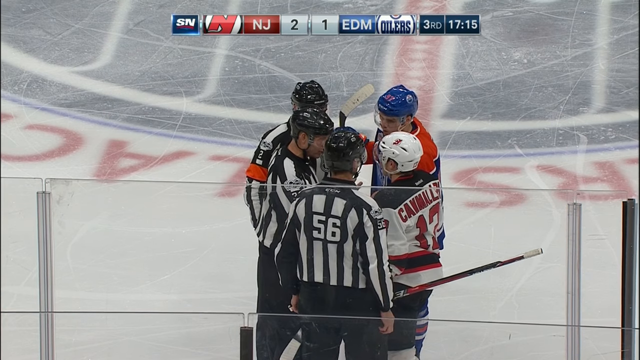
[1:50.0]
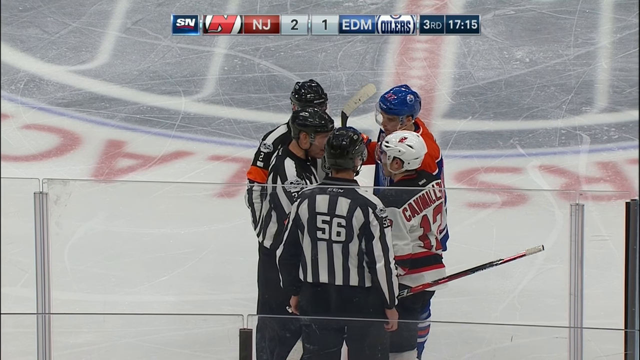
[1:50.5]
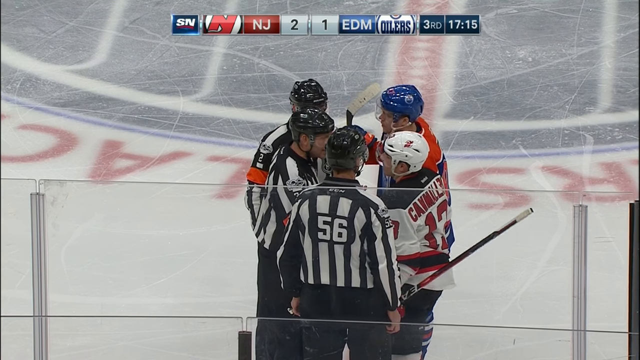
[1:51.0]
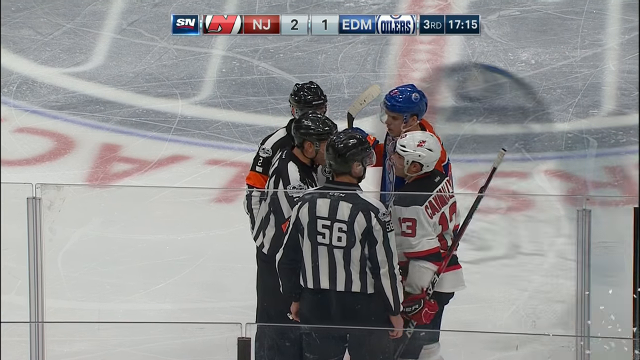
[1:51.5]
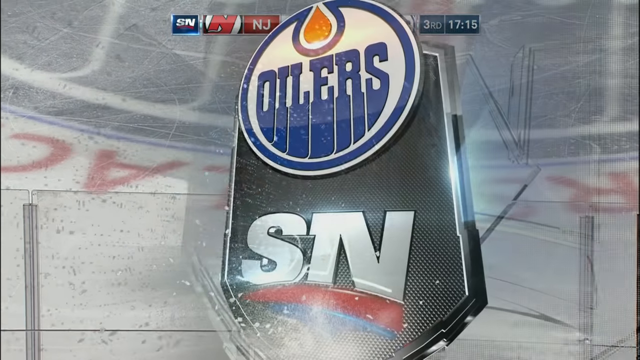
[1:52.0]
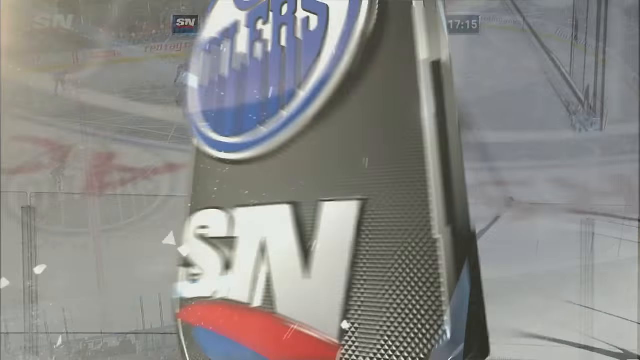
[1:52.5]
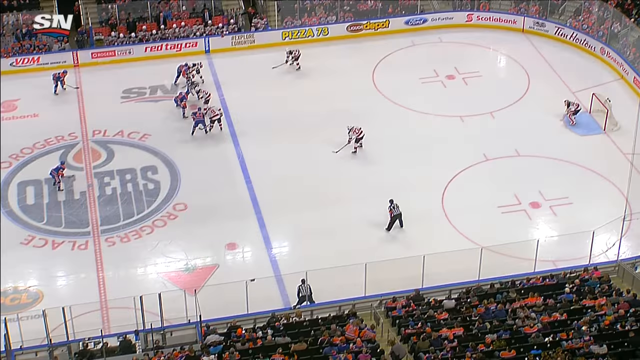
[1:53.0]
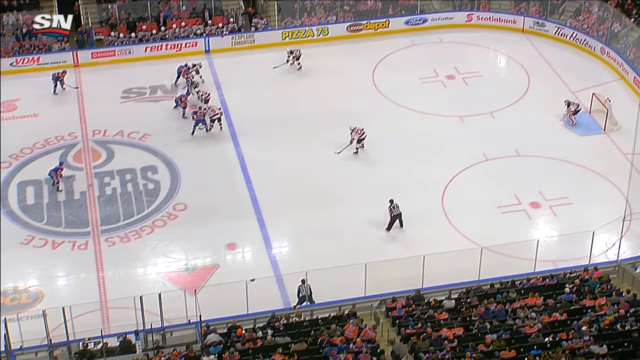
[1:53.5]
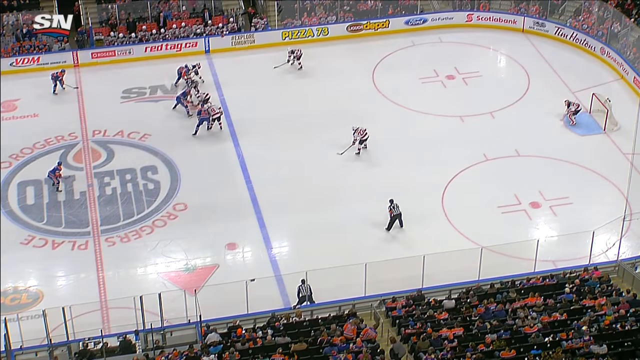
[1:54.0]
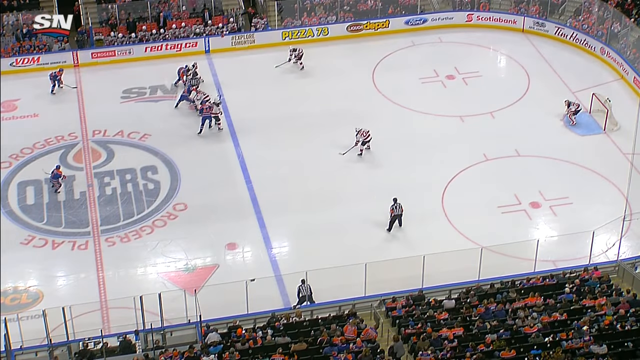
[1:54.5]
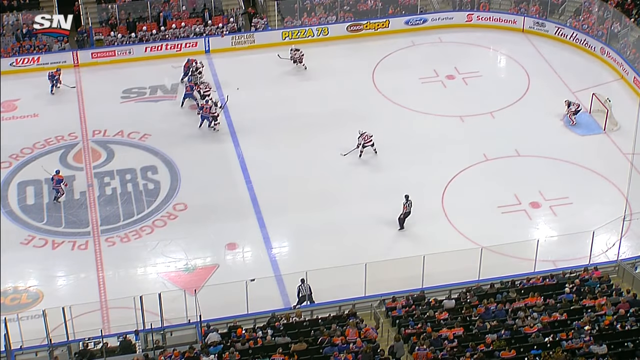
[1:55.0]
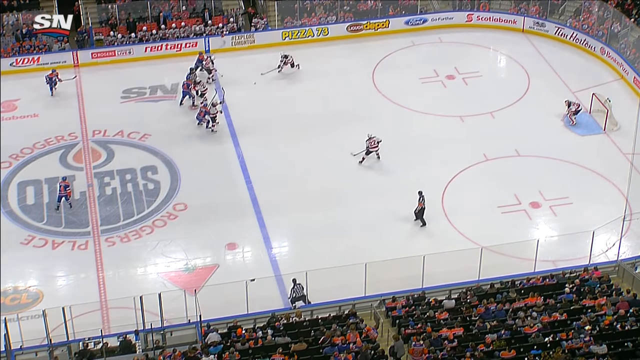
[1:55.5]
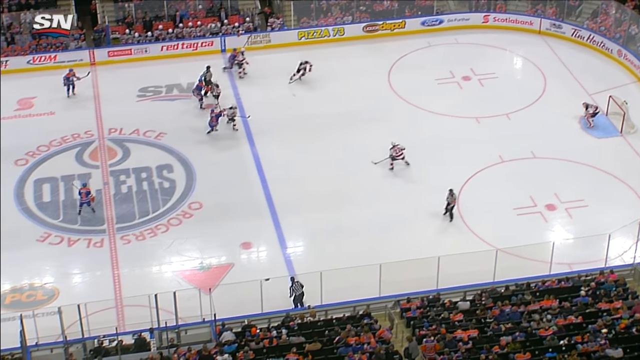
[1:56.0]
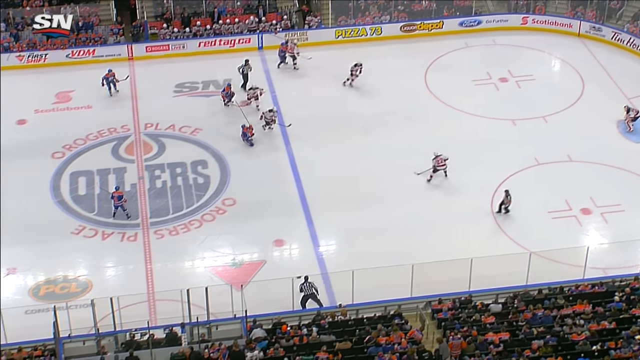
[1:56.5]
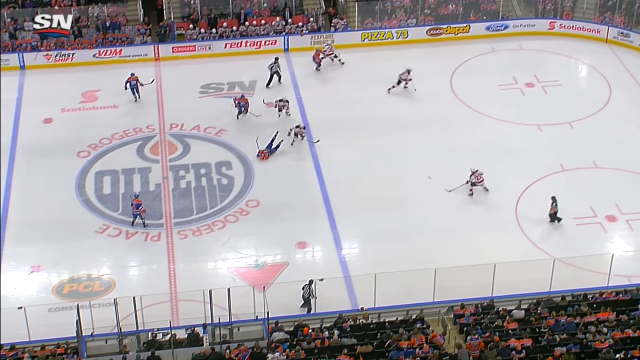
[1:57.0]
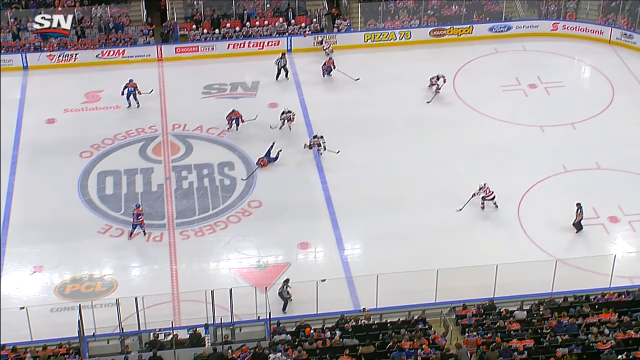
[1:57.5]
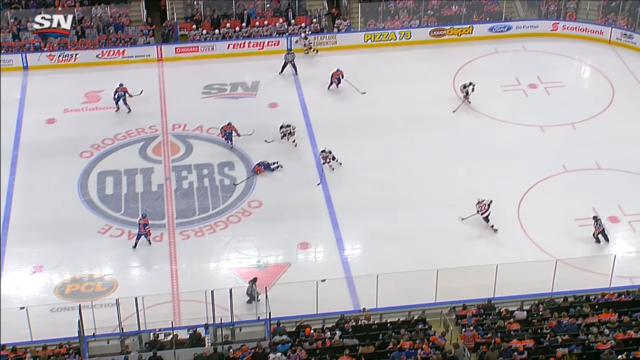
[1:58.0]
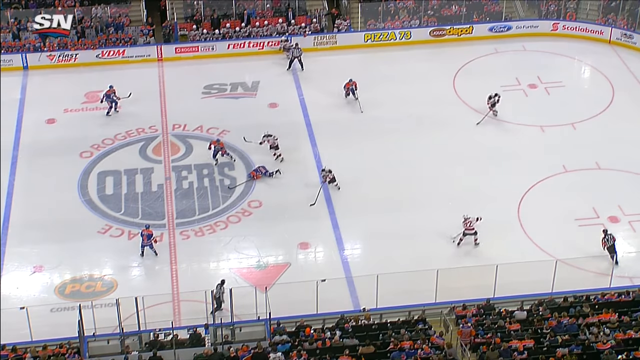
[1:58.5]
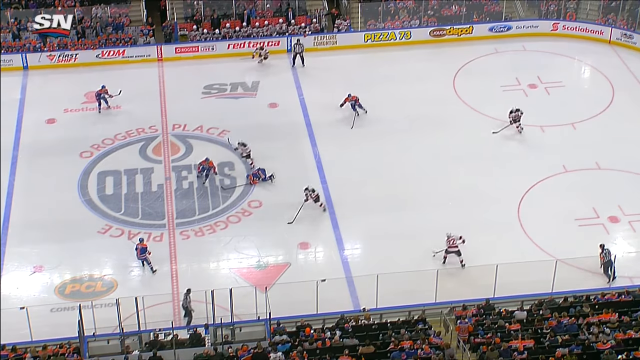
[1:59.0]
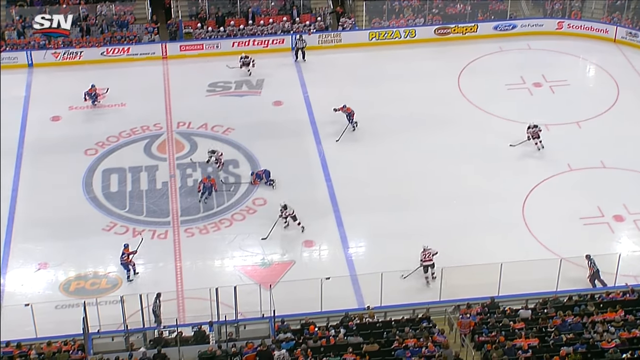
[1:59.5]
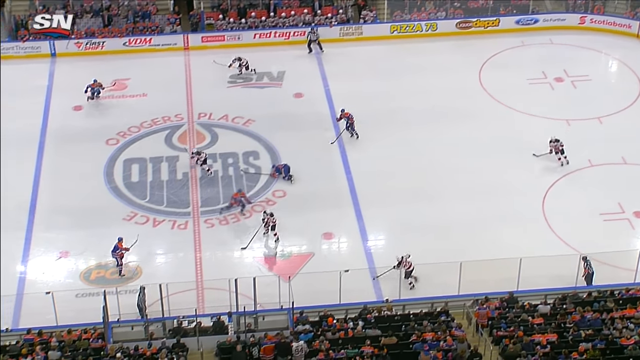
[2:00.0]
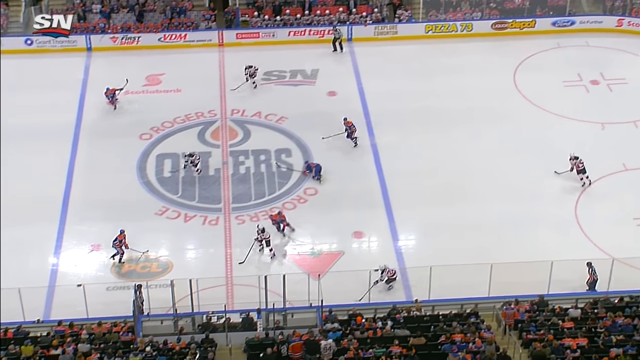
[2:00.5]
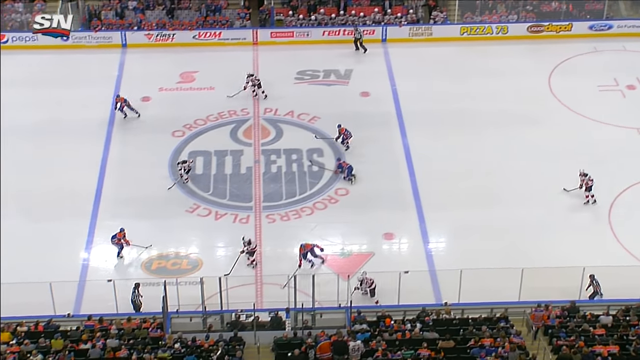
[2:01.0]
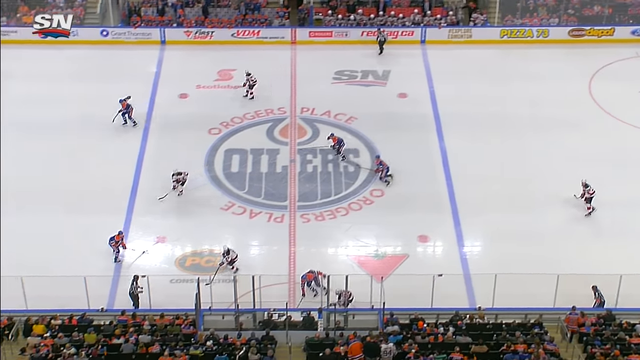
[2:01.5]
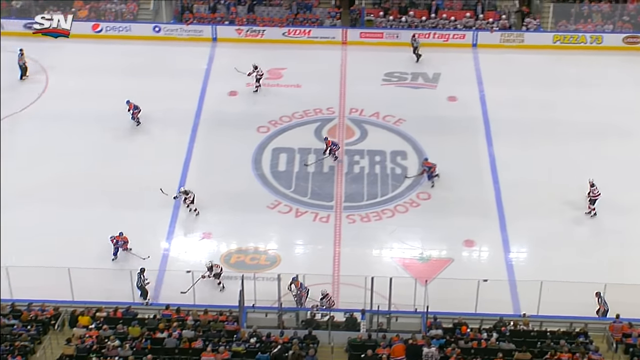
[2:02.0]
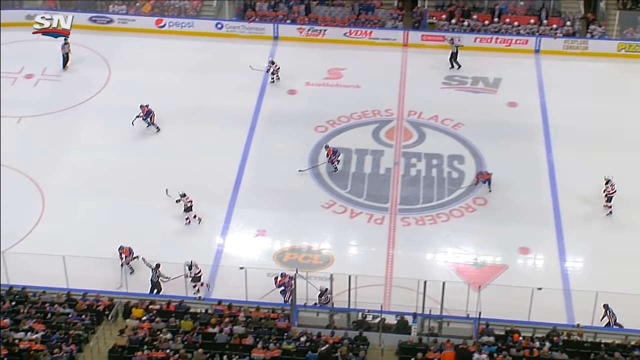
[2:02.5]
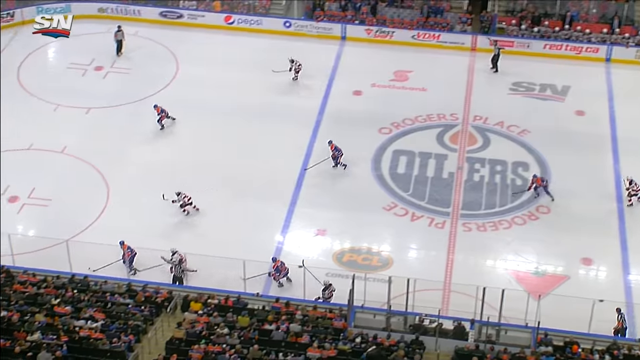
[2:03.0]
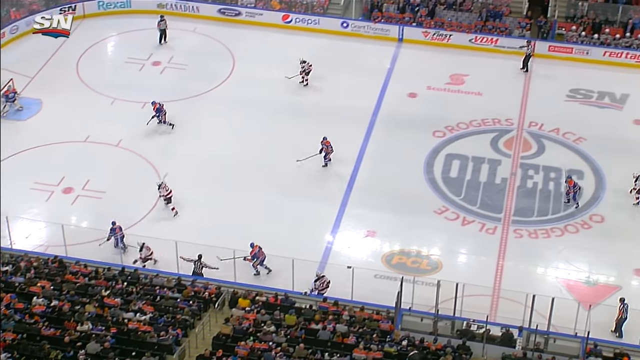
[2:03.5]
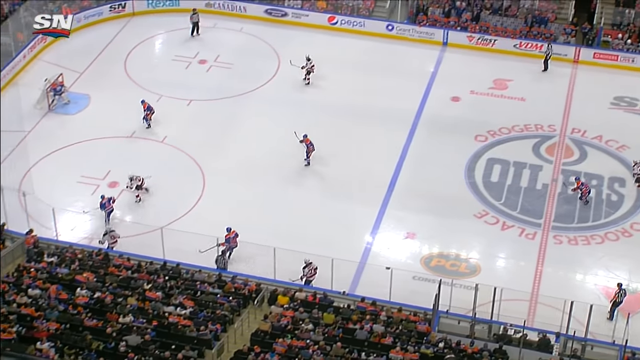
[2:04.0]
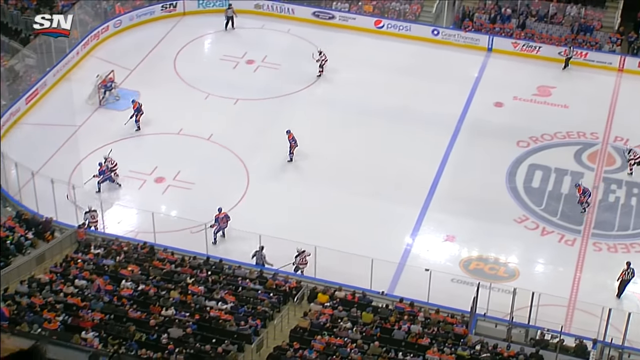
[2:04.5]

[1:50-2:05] It appears to be the start of the third period. Players brawl, throwing punches, while the referees look on. The Oilers captain lands three blows to a Devils player's face as the Devils player tries to dodge and puts his hands up. The game is at Rogers Place.